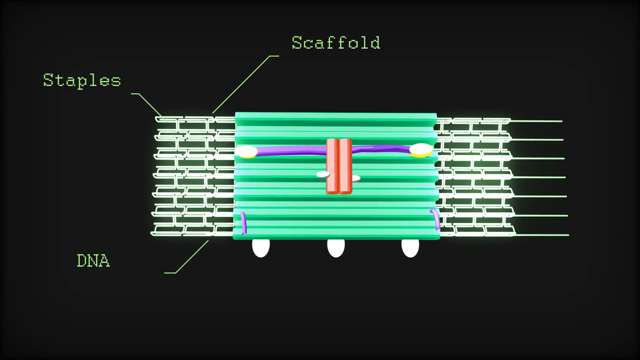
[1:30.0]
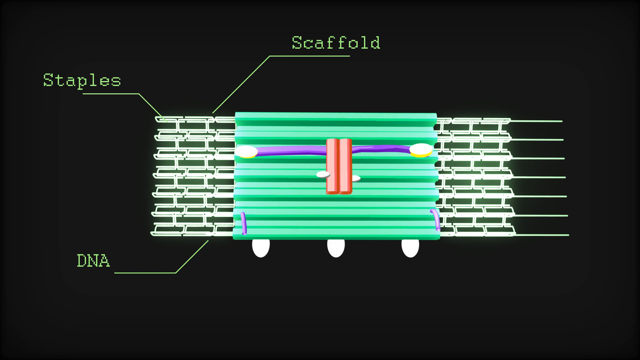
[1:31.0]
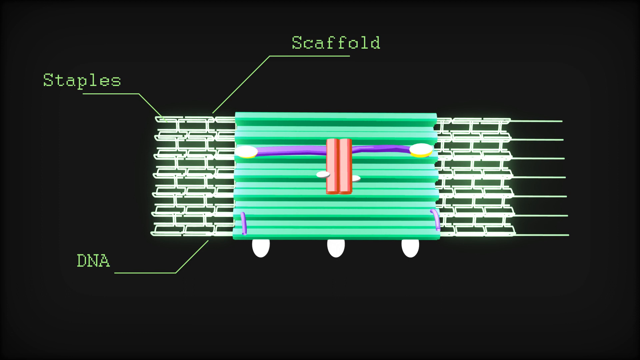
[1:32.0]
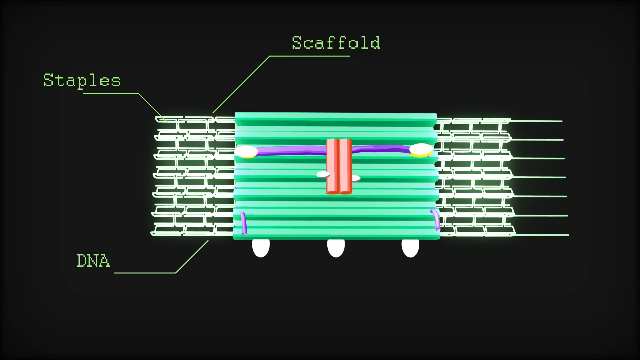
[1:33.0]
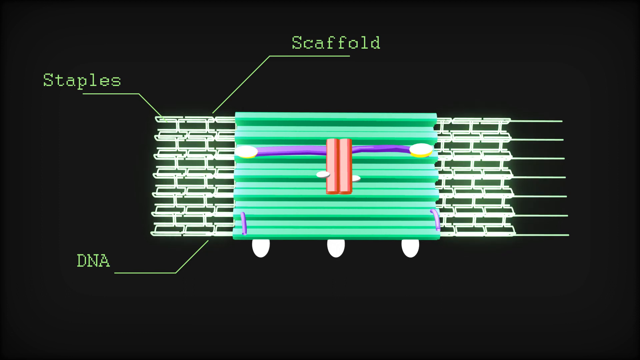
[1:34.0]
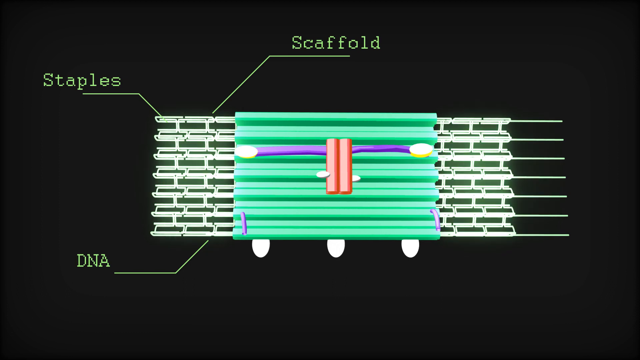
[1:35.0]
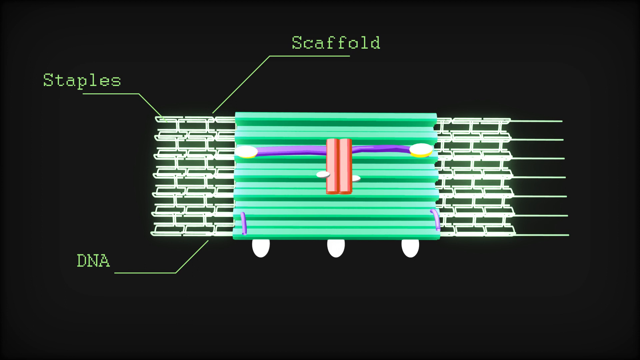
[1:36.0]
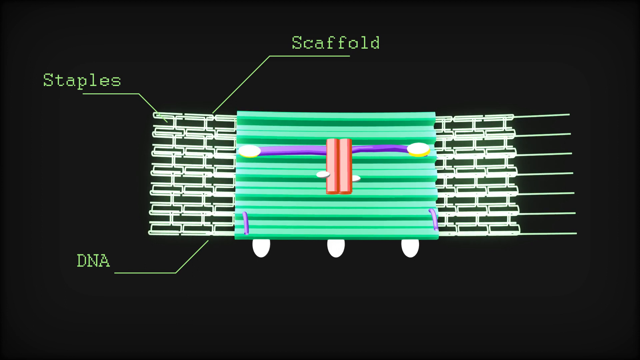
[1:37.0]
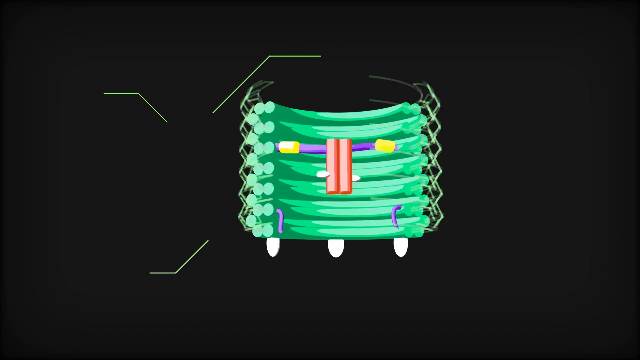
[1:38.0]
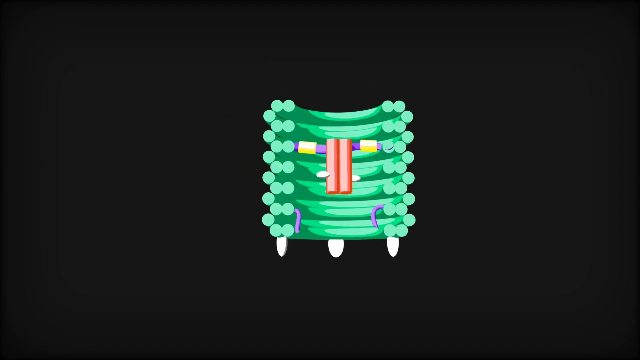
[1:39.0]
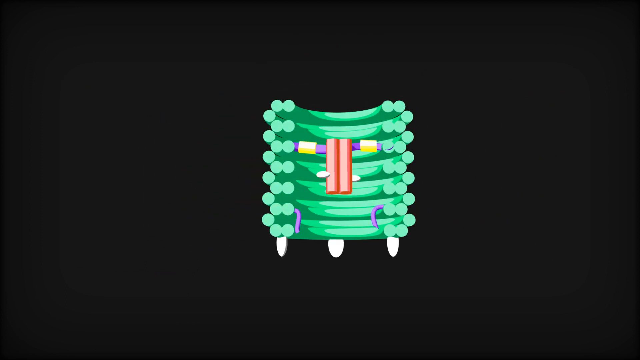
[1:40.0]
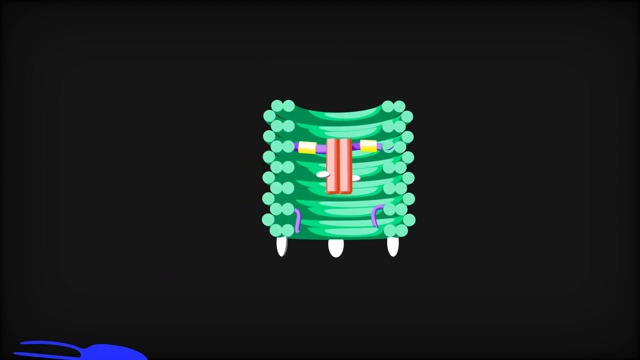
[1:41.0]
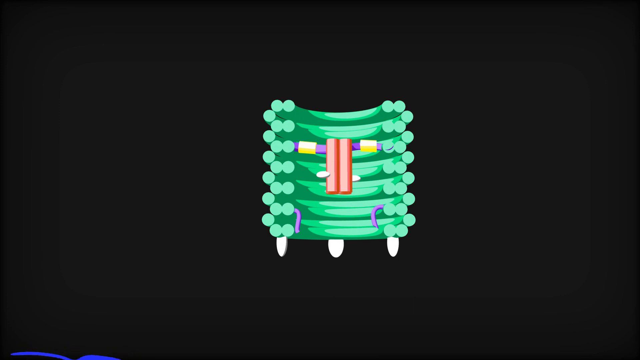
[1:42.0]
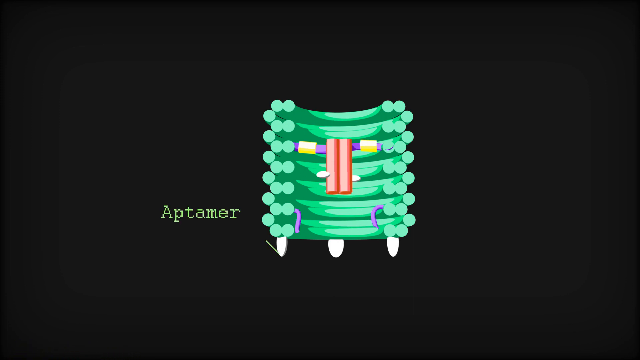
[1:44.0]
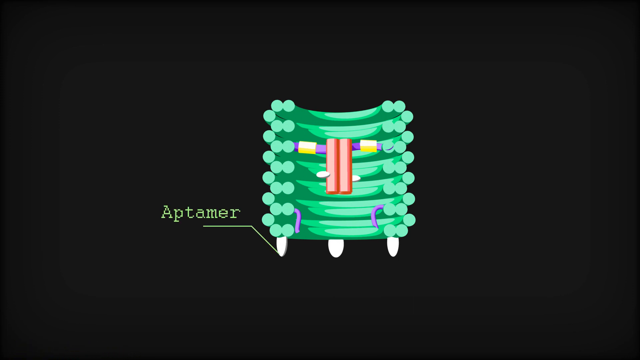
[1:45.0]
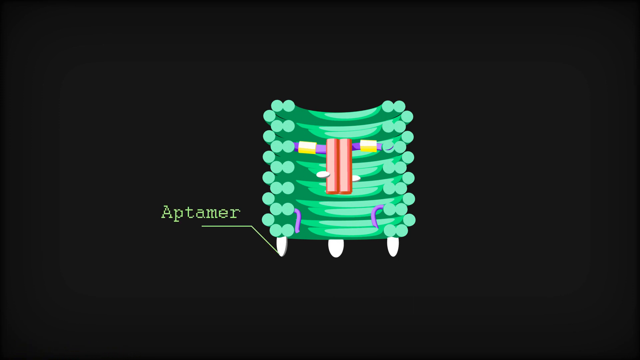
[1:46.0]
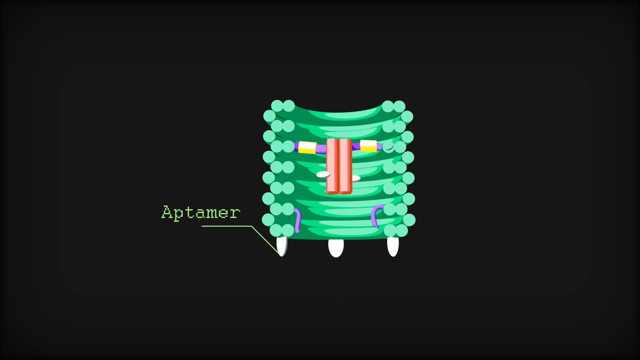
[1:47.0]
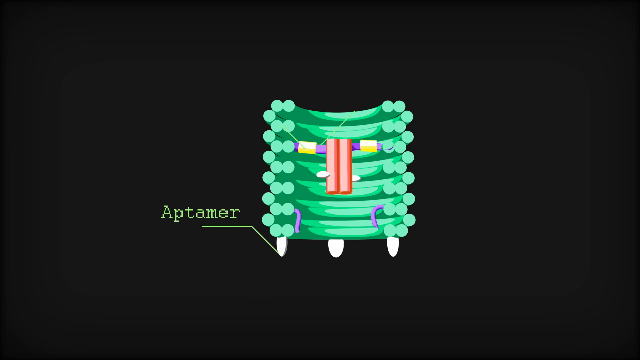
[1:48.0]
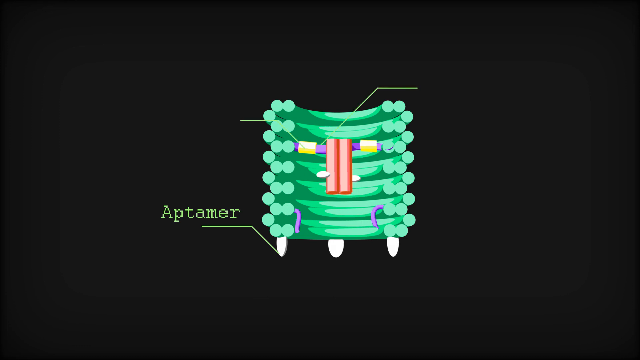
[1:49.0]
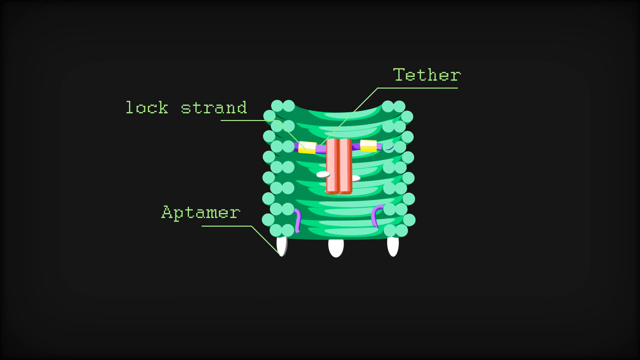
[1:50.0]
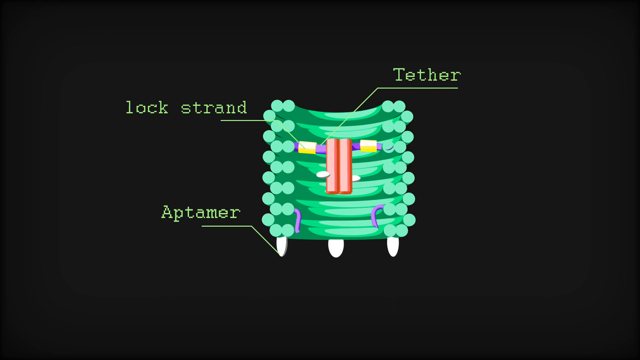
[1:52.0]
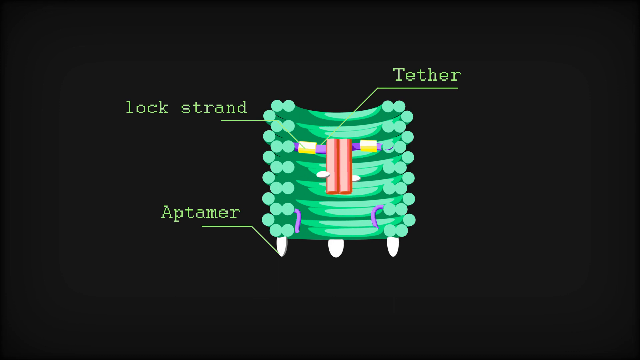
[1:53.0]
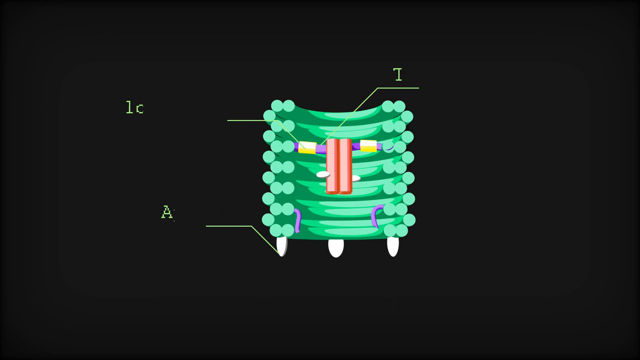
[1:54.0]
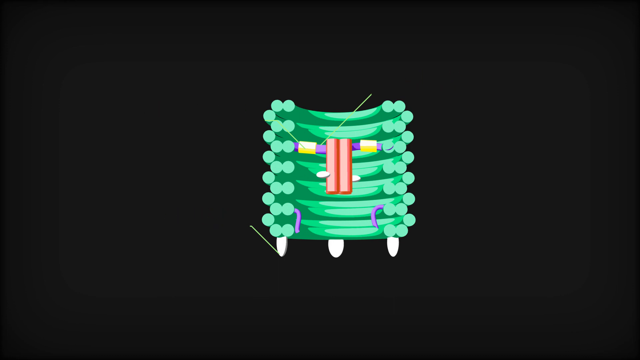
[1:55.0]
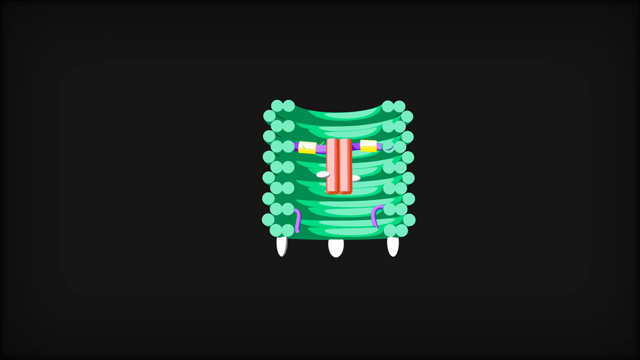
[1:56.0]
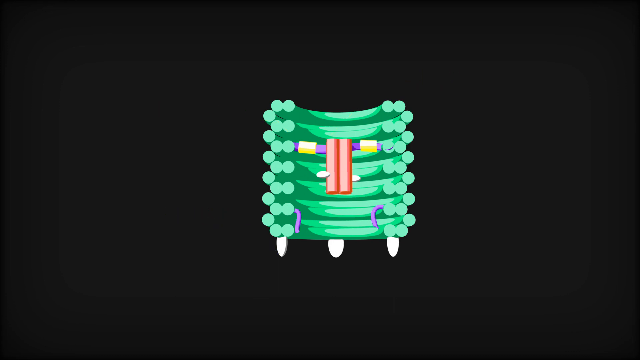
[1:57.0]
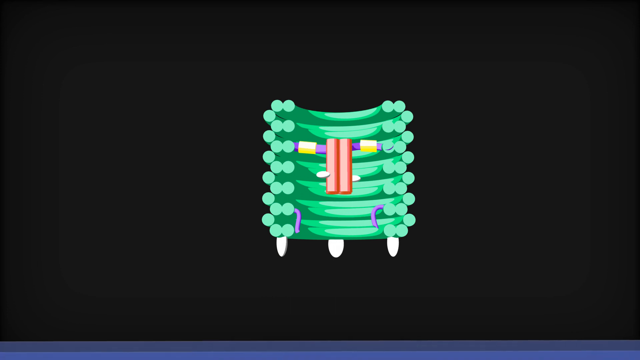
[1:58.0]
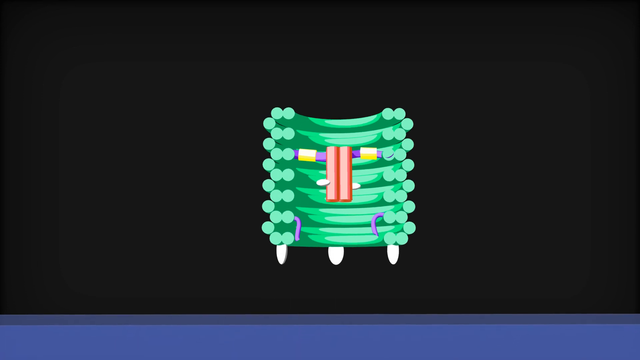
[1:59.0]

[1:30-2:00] The staples DNA and scaffolding of the opened-up bacterium are shown, and then it closes up again. The bottom is shown, with a small diagram pointer and text that reads "aptamer". At the top, the purple and yellow bar seems to be called a lock strand, or maybe just the yellow part is. Text reading "tether" seems to point to the purple part, though it is hard to see. The text disappears, and the opened-up bacterium starts to descend.